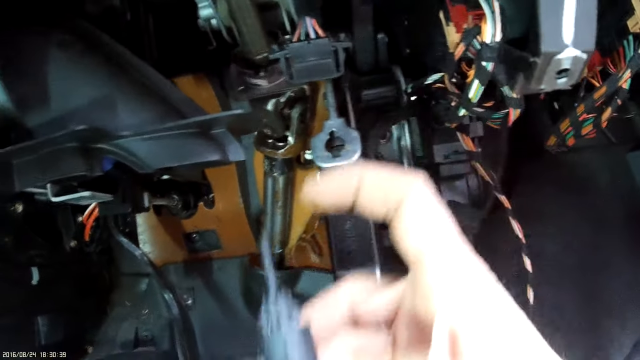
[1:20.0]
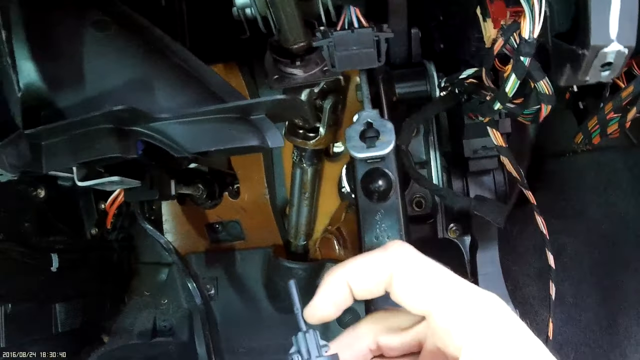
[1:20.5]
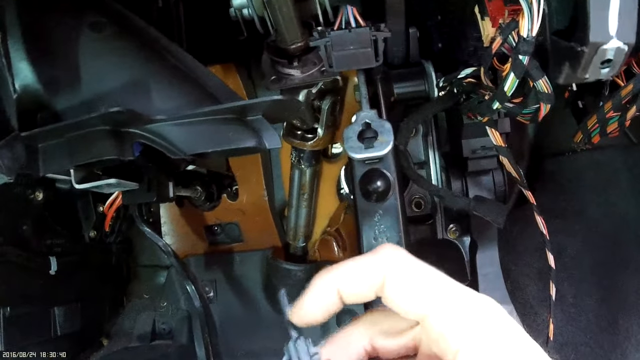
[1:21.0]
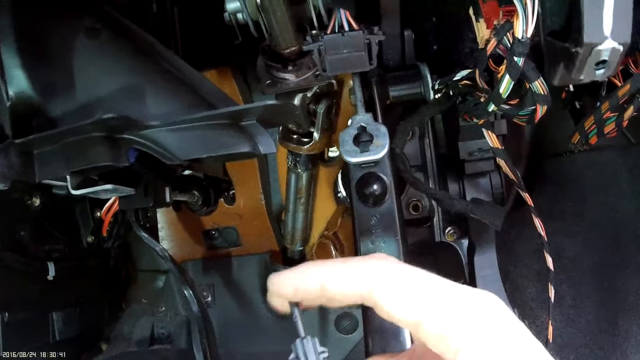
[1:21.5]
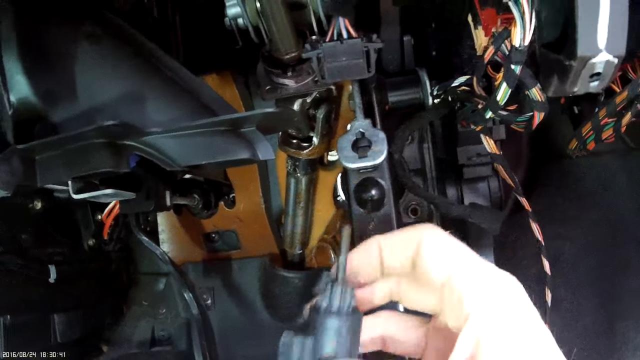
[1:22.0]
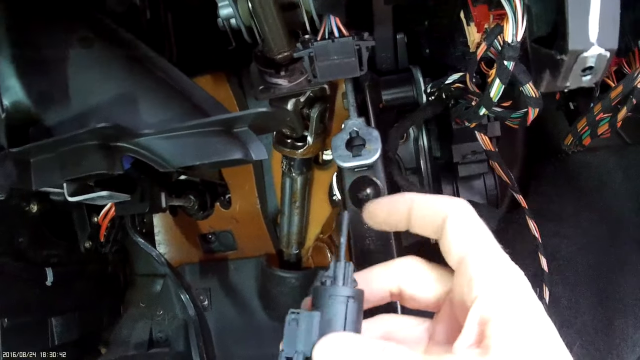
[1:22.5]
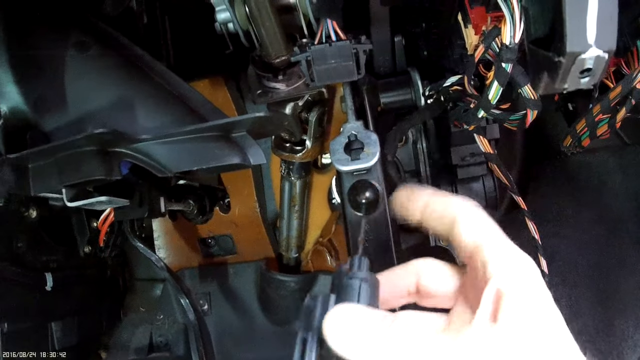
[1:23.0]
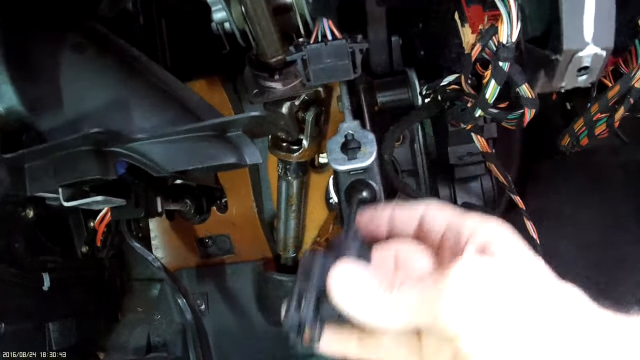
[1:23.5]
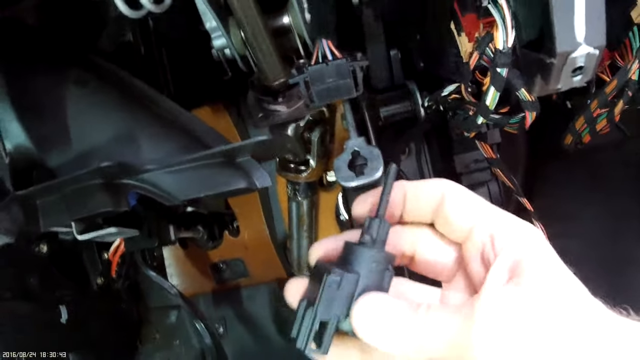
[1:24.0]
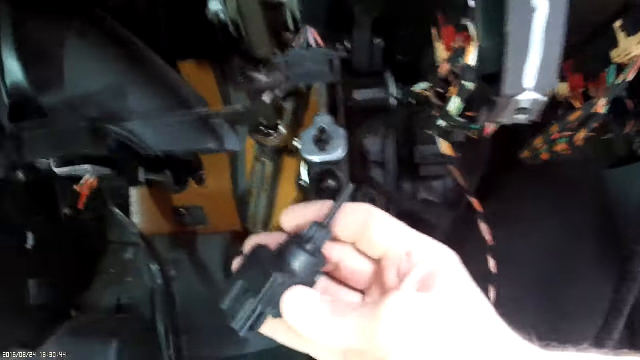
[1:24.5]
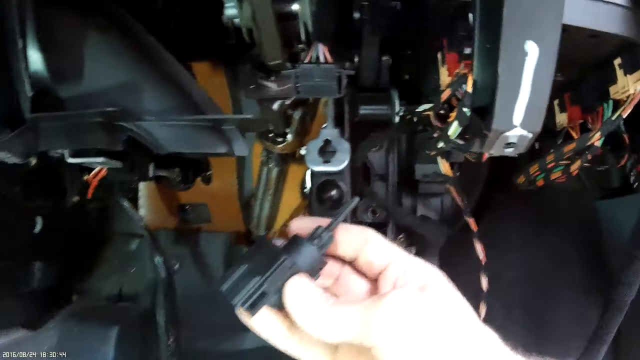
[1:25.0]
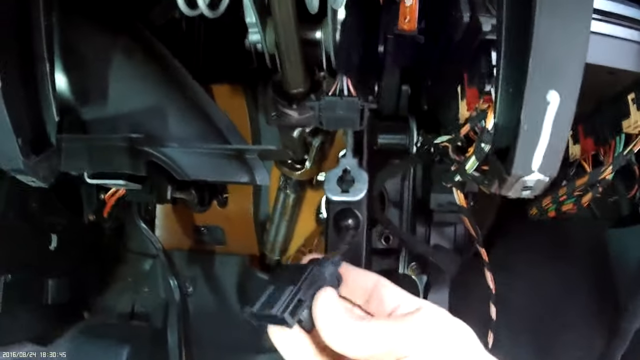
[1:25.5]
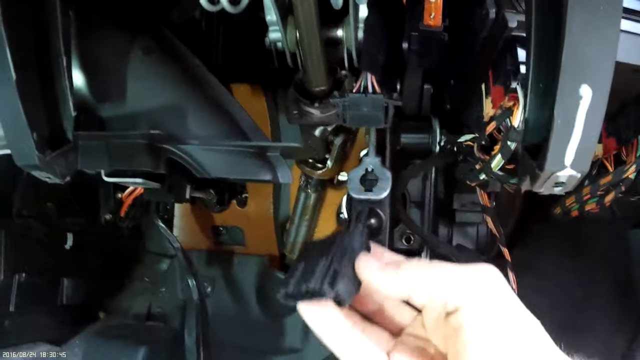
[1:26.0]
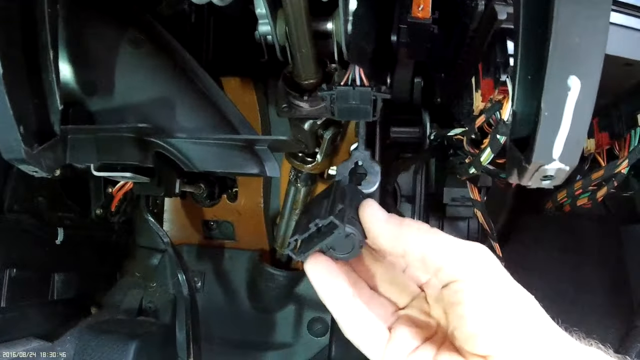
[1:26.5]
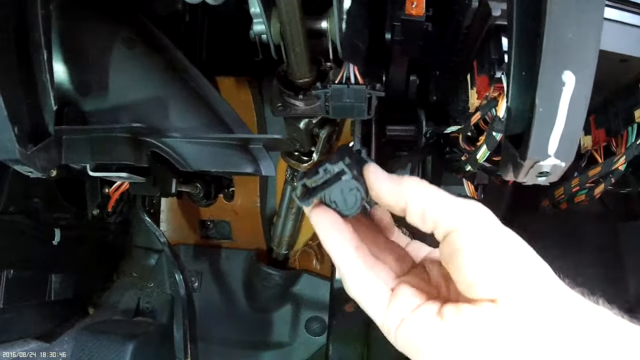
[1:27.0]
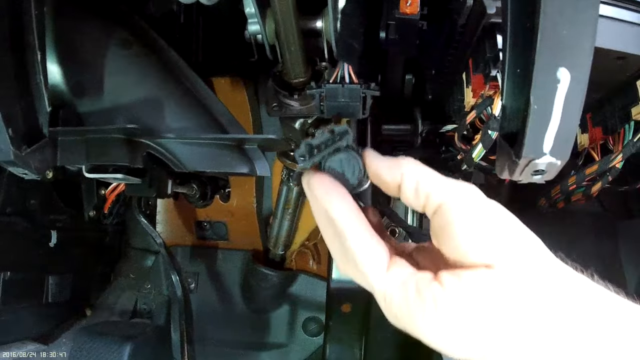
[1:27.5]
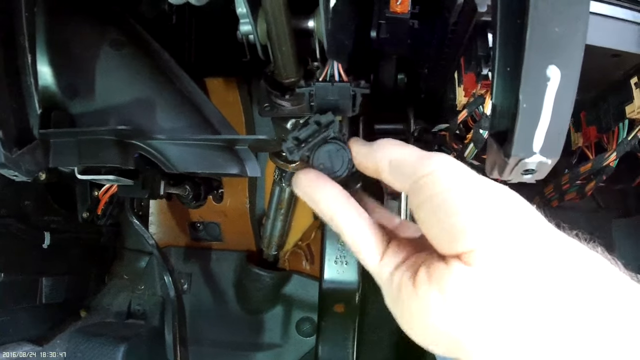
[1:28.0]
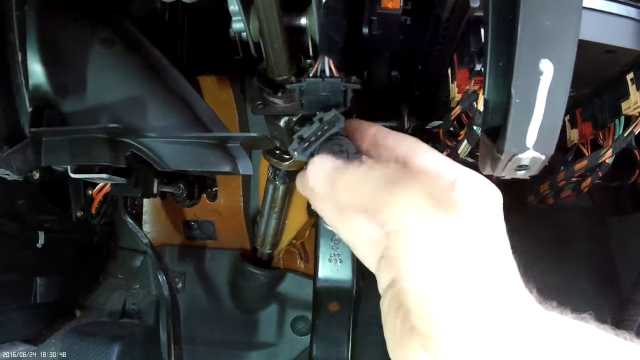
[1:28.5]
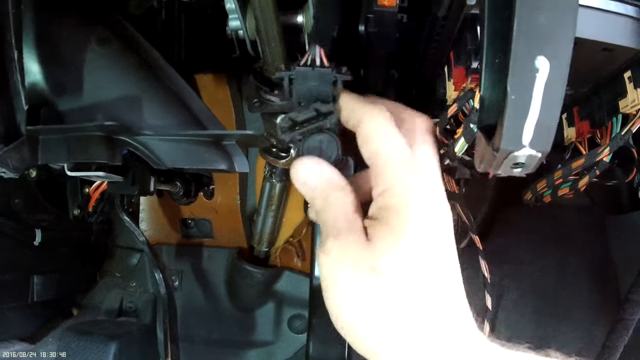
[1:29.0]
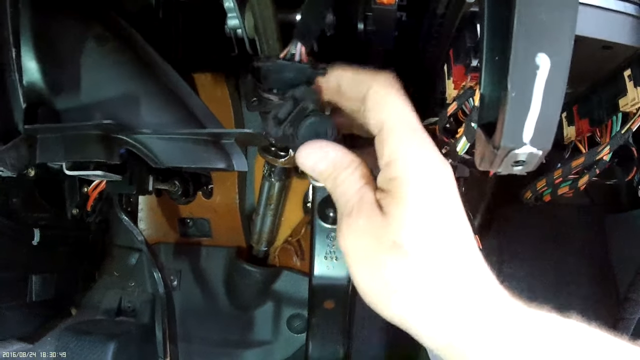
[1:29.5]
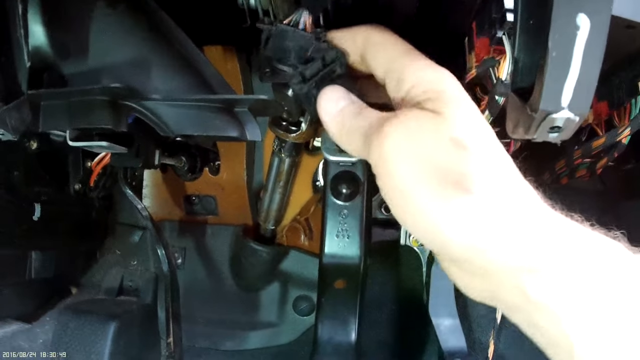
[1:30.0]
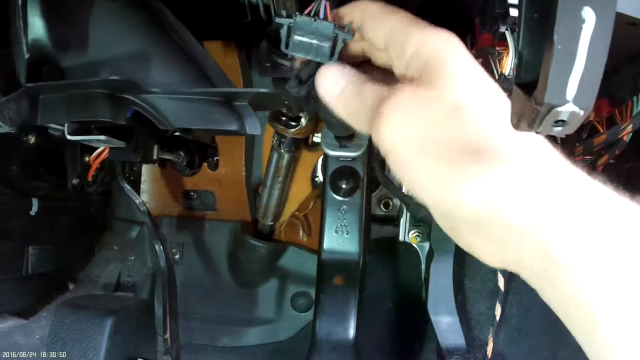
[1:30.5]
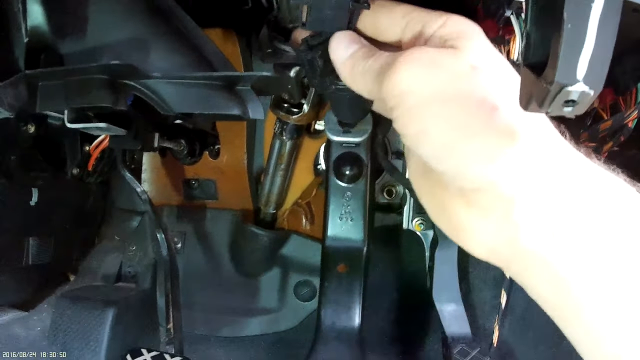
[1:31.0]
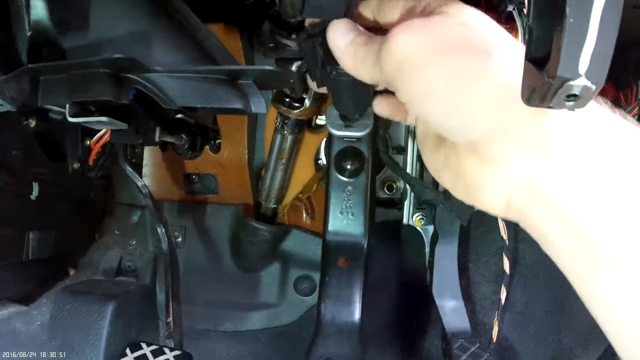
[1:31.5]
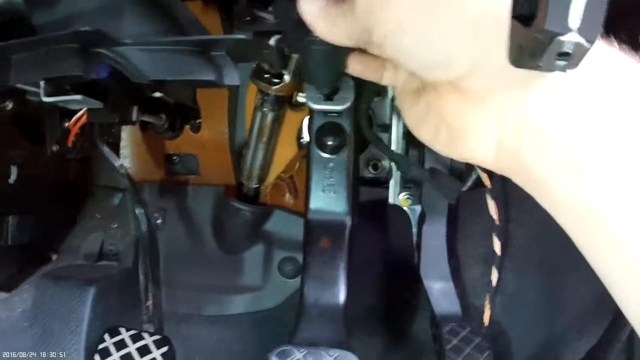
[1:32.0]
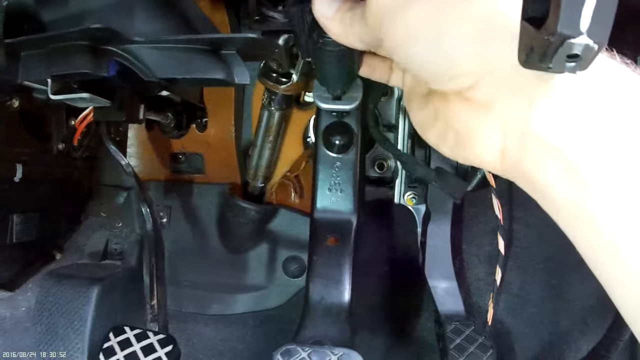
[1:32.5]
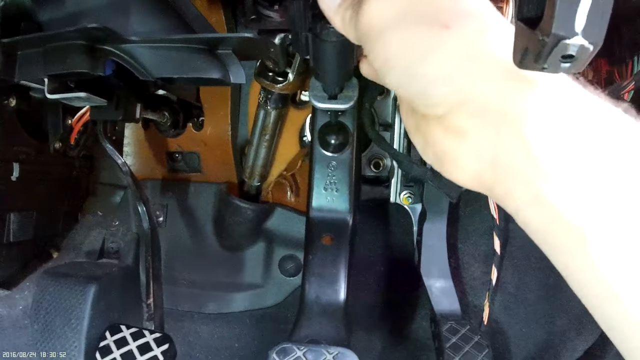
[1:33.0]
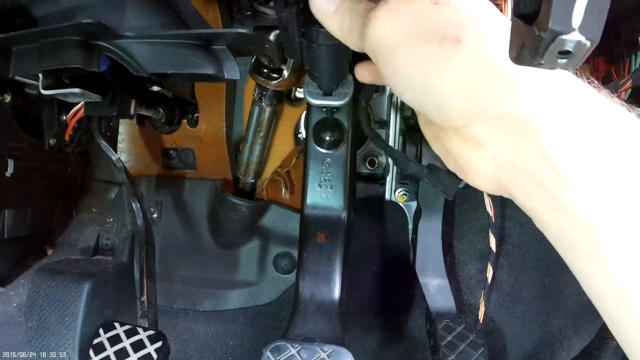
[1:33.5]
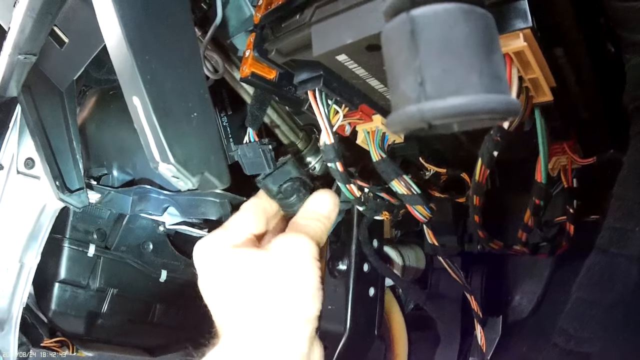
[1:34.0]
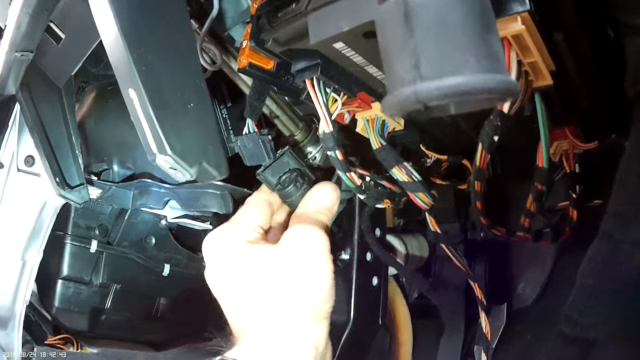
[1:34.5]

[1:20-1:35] The man continues demonstrating how to insert the piece correctly, then inserts it into the stainless steel piece with the holes lined up. He sort of shoves it in, gets it lined up, and shows that it is lined up, applying a little force but not too much.